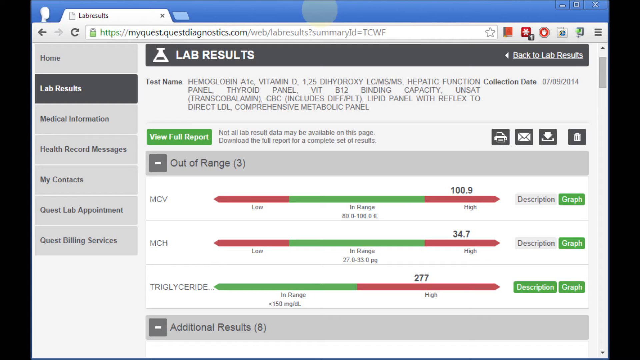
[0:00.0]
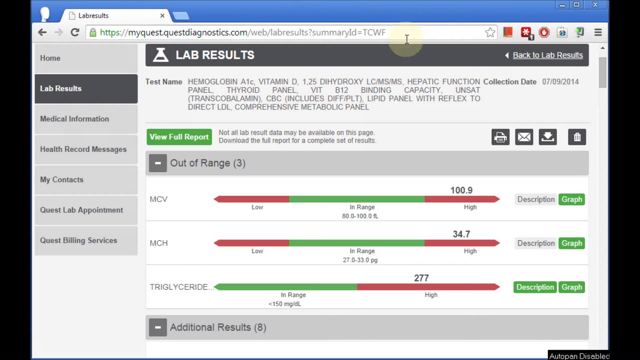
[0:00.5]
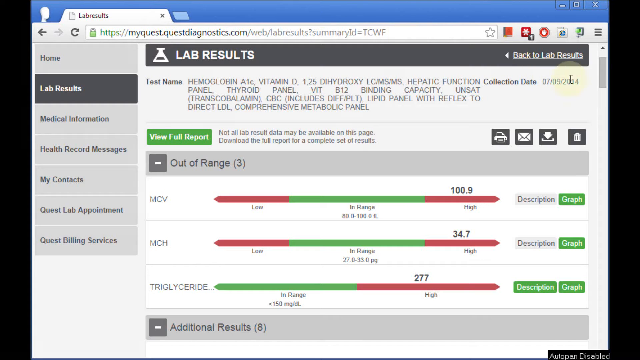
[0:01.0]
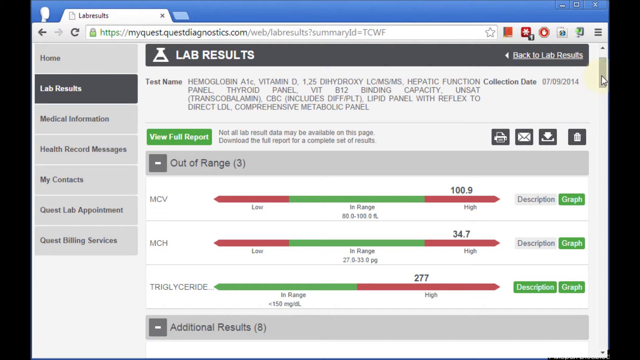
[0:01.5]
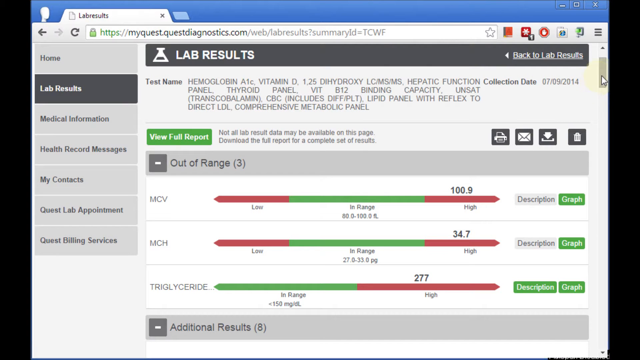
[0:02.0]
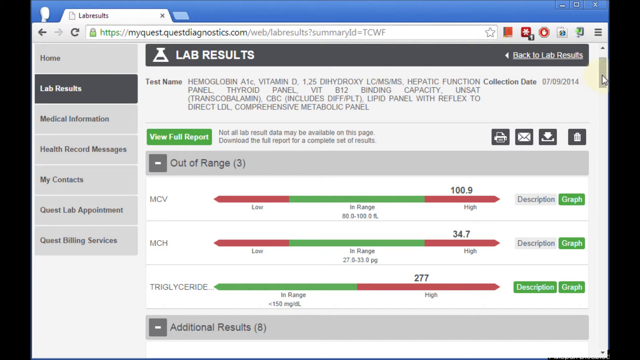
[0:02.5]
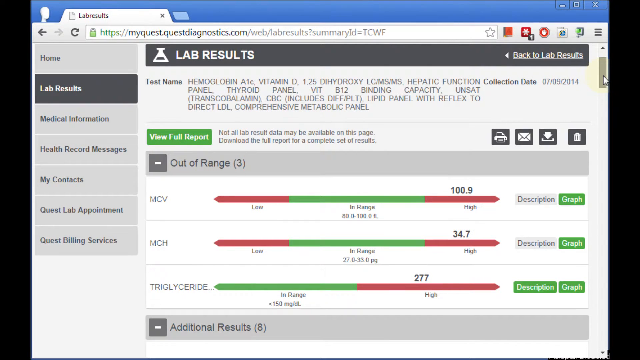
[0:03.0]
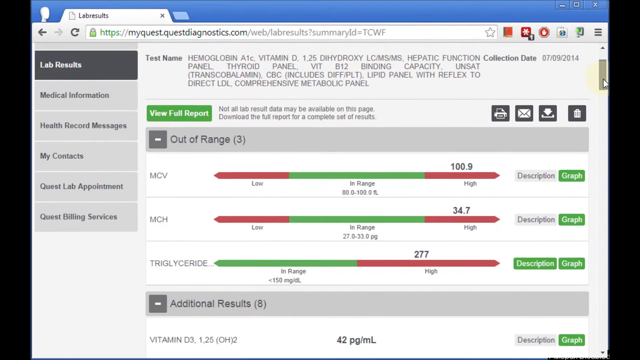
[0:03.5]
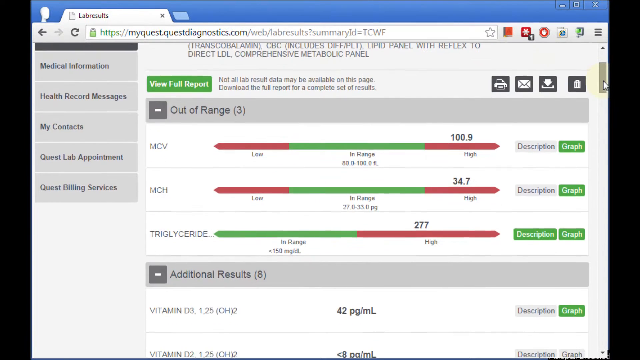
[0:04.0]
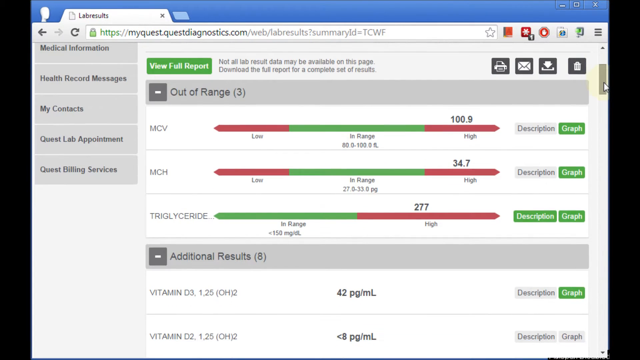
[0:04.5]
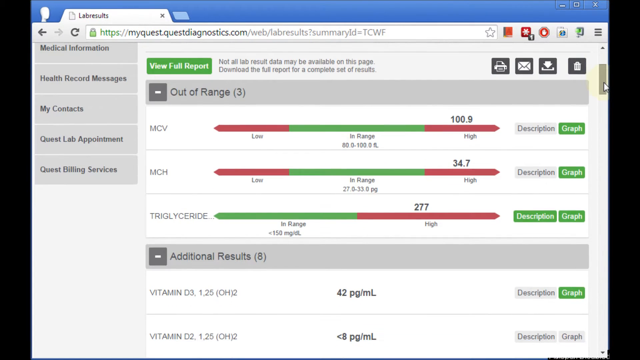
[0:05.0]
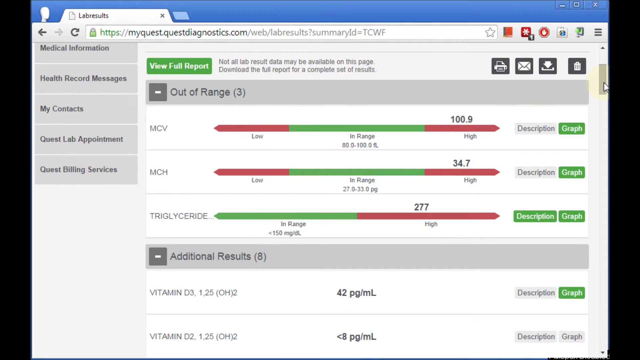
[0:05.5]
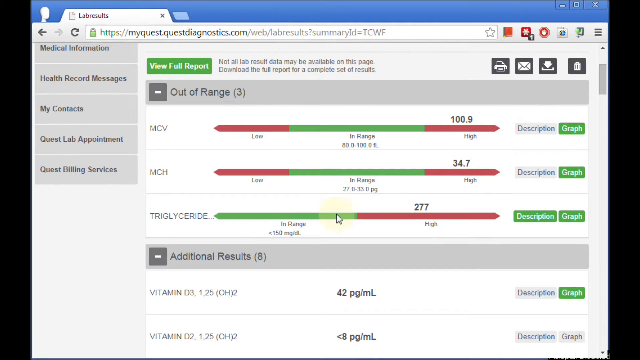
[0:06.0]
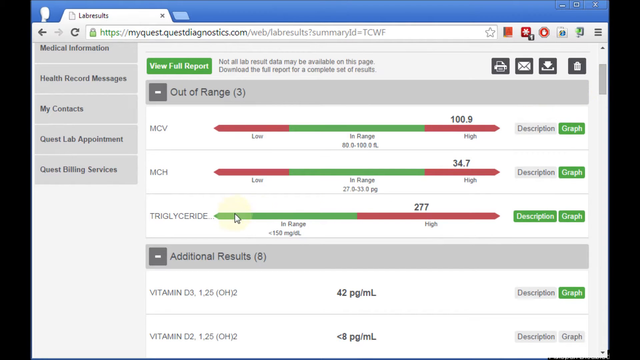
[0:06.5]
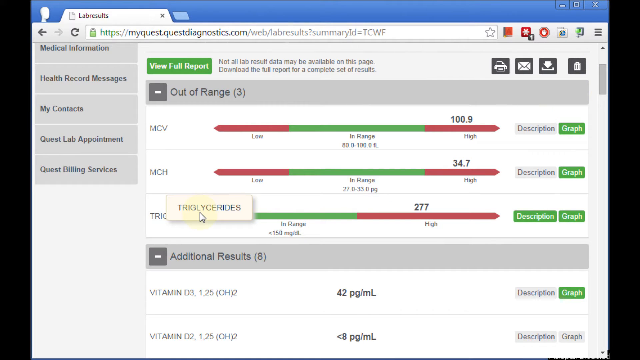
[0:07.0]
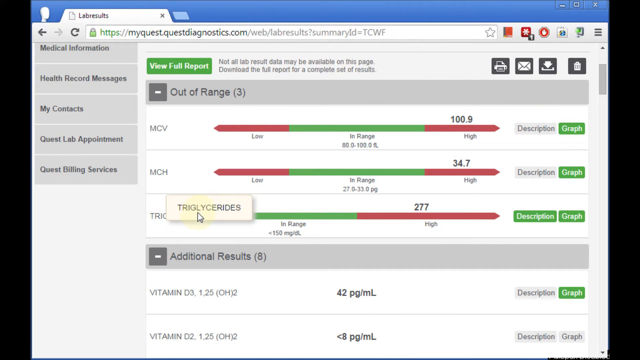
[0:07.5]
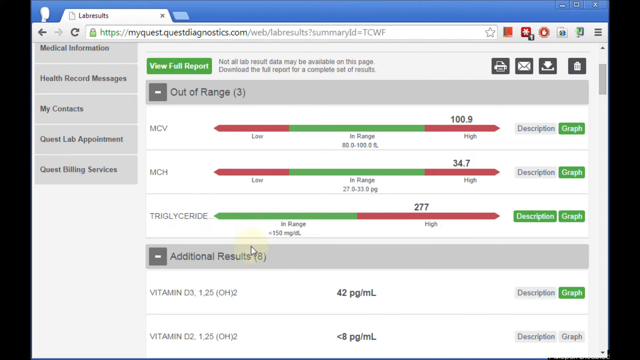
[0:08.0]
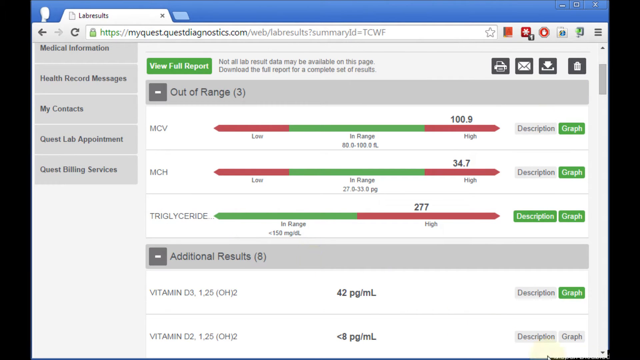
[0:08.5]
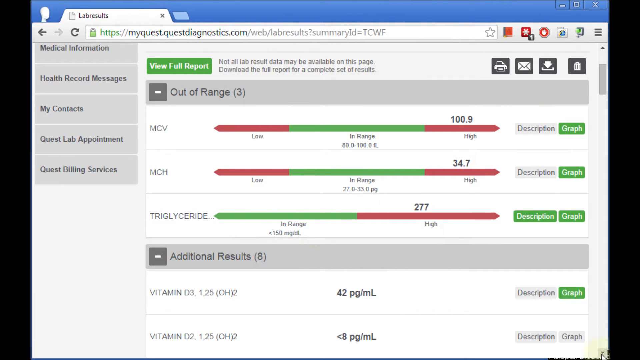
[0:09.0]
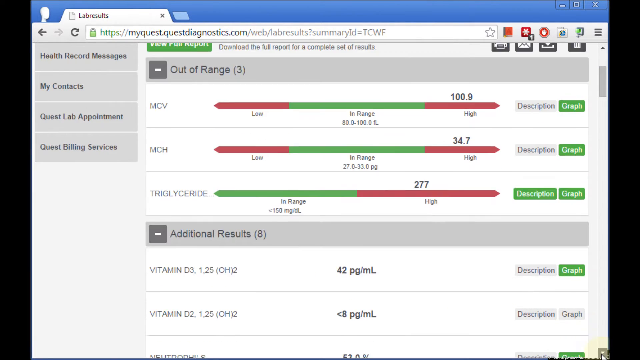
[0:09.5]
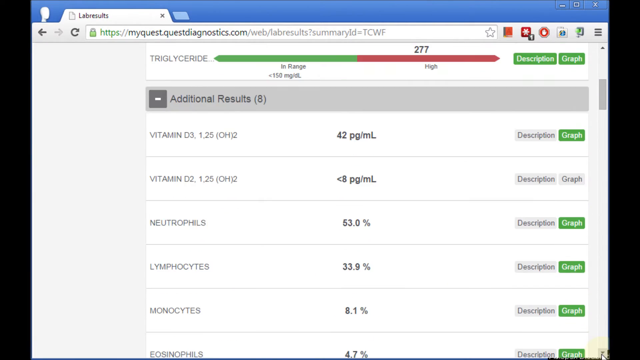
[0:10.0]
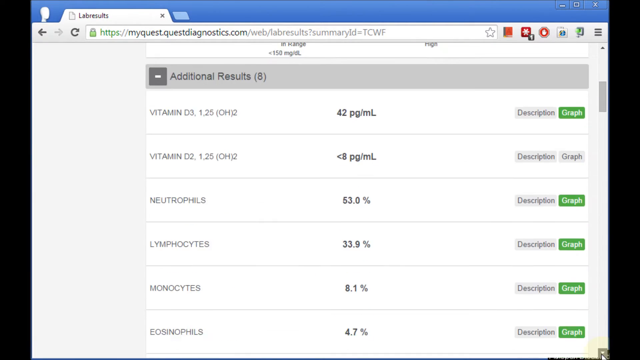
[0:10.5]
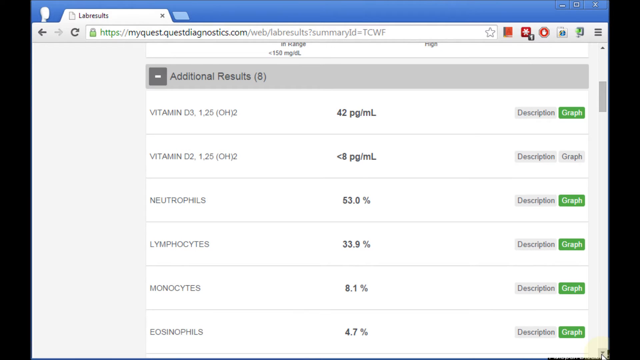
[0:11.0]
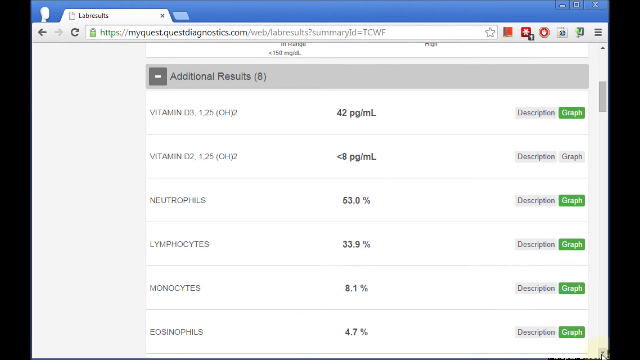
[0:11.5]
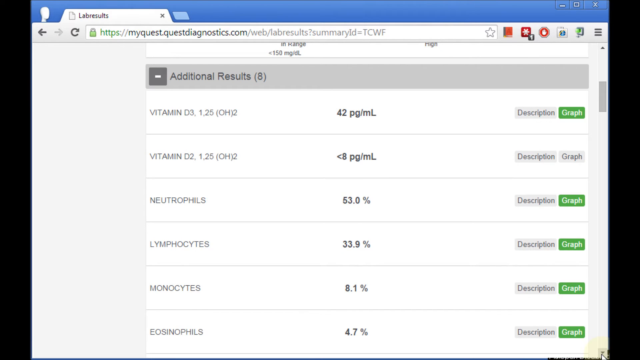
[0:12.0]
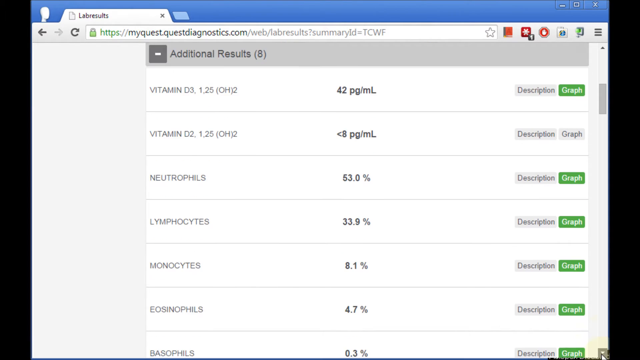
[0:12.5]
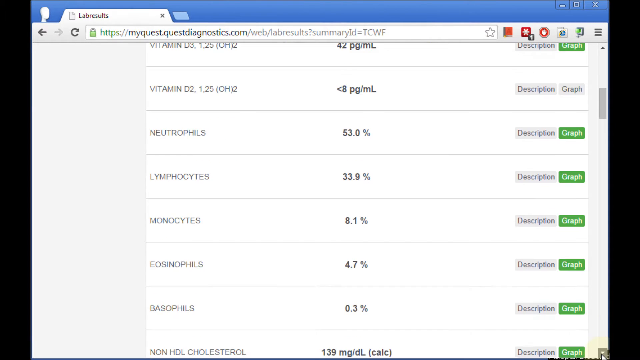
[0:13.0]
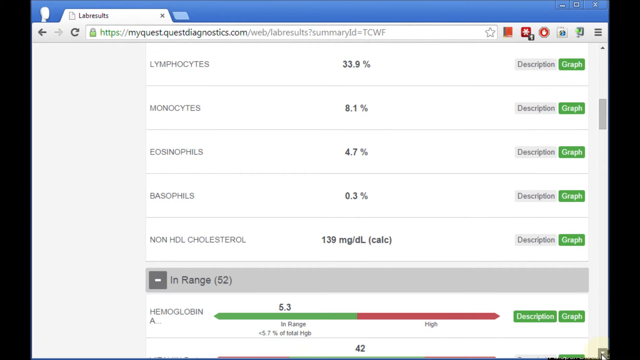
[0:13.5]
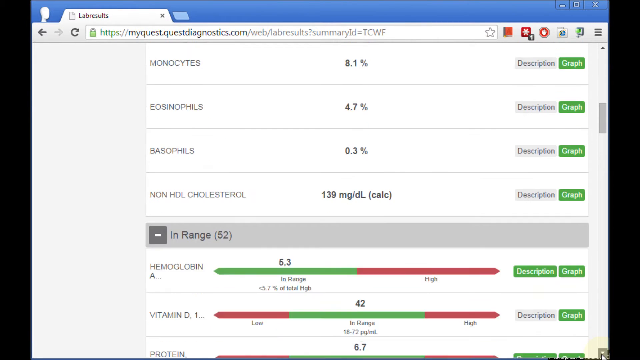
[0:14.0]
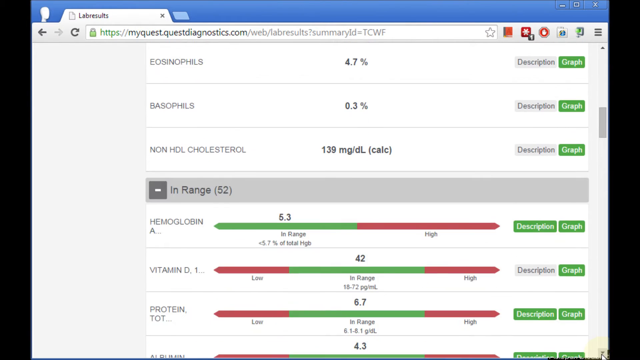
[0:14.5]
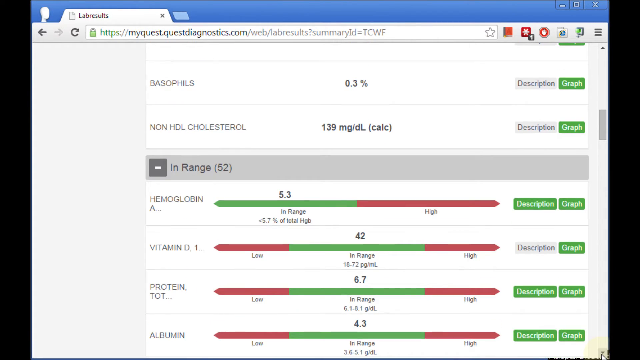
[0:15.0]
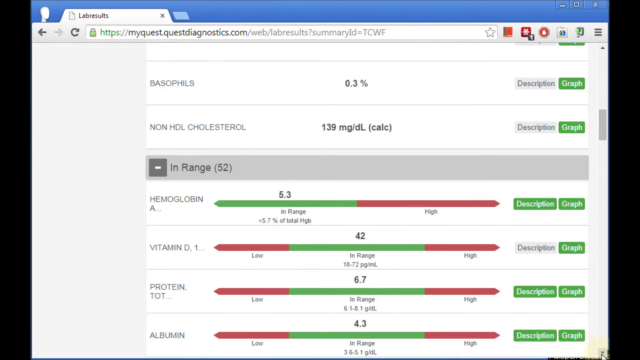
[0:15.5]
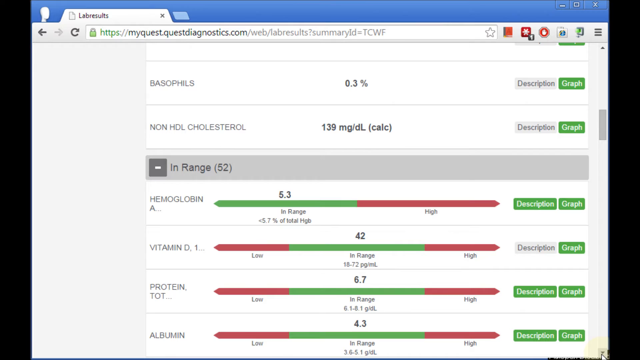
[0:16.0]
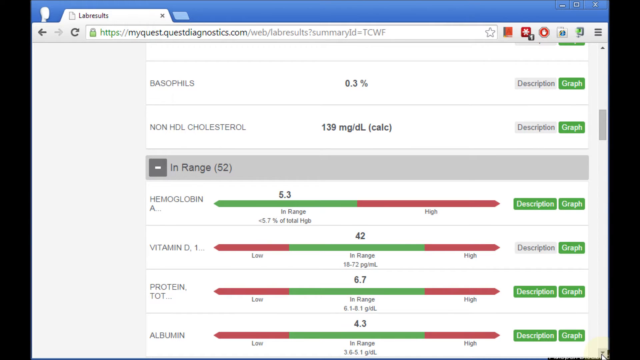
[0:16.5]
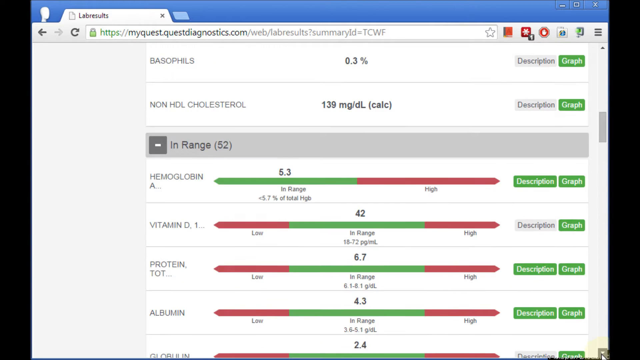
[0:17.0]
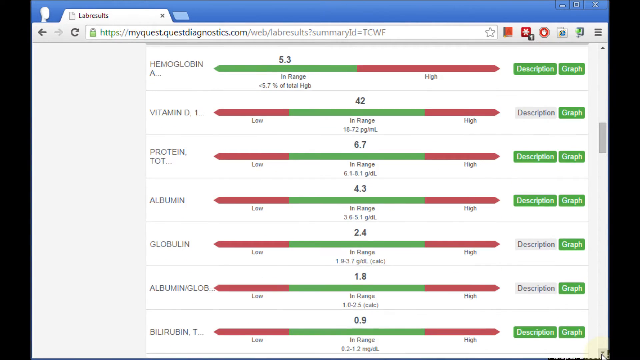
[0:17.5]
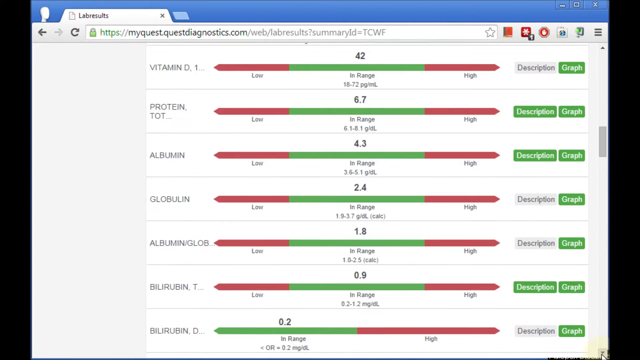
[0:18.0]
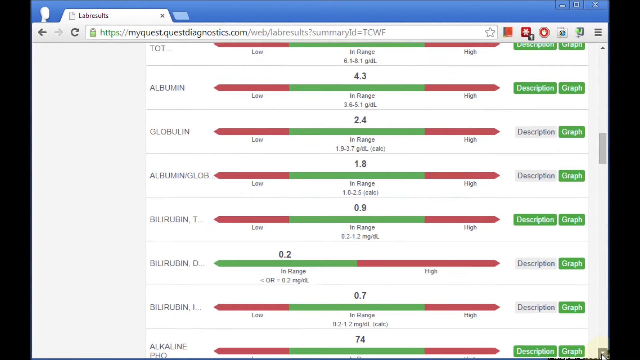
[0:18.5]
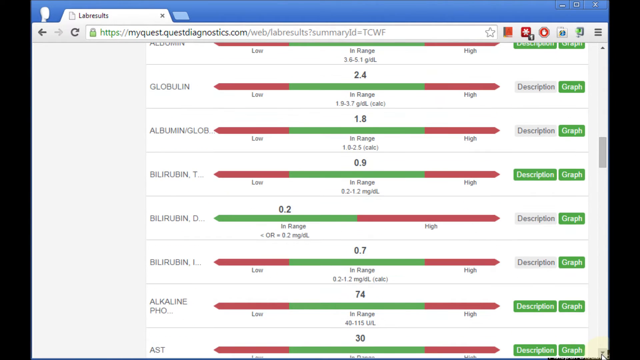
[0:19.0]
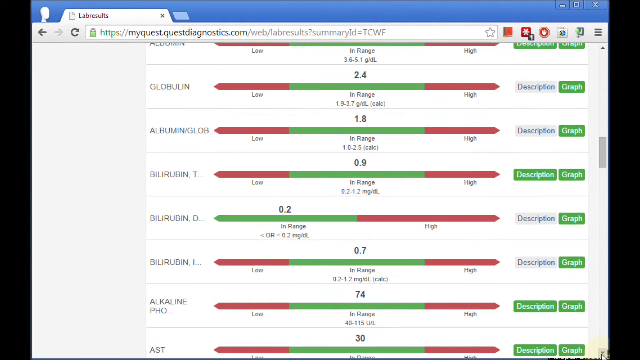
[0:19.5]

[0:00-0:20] A person's lab results are displayed on a computer screen. A menu on the left side lists "Home", "Lab Results", "Medical Information", "Health Record Messages", "My Contacts", "Quest Lab Appointment", and "Quest Billing Services", with Lab Results shown. At the top, the test name appears, listing all the tests that were ordered, including hemoglobin, vitamin D, and a comprehensive metabolic panel, and the collection date reads "7-9-2014". Three scores are shown as out of range. Each uses something like an arrow divided into three parts, two red and one green, marking where the person scored: 100.9 for MCV, in the high range; 34.7 for MCH, high; and 277 for triglycerides, high. A mouse cursor moves down the page, apparently looking through the reports, and hovering over certain parts of the reports makes more information pop up. Fifty-two results are in range, and the person goes through them. Toggles allow viewing the results as a description or as a graph, and there are buttons to print, email, download, or trash the results.